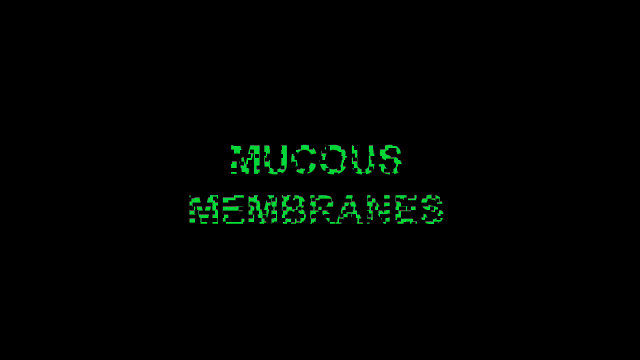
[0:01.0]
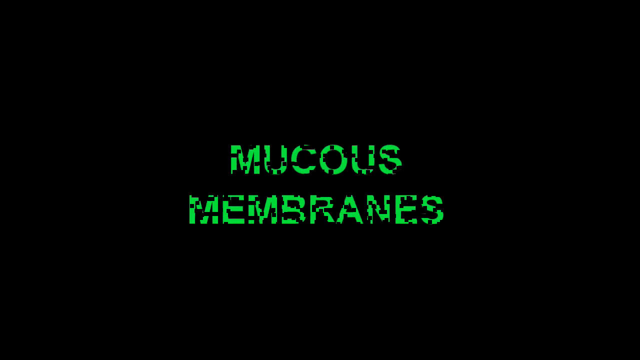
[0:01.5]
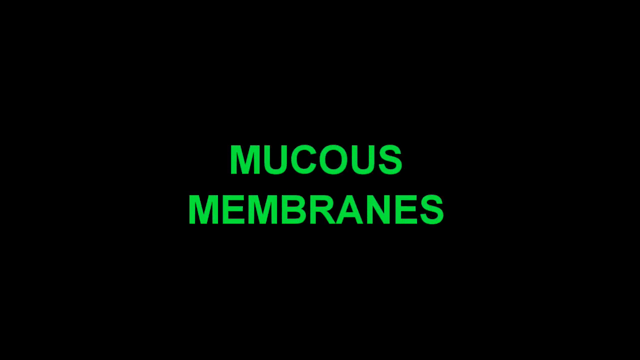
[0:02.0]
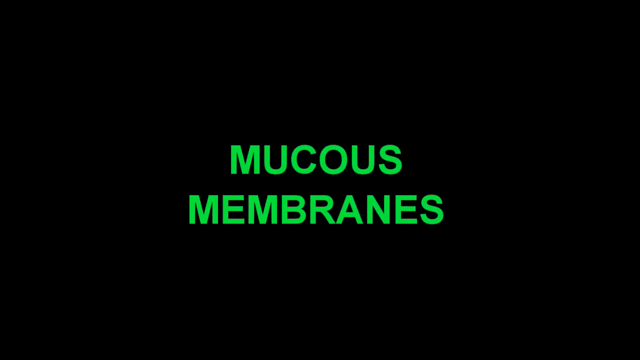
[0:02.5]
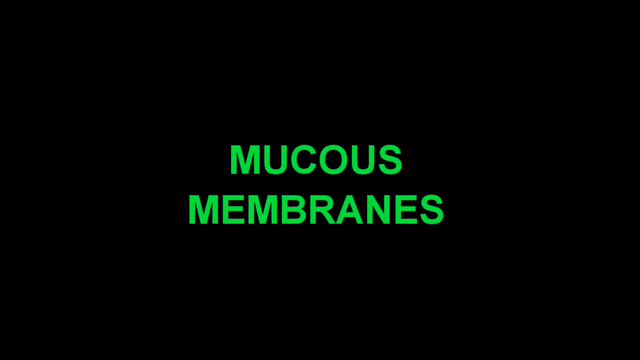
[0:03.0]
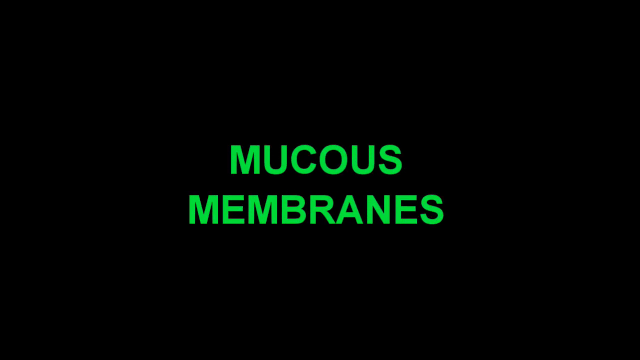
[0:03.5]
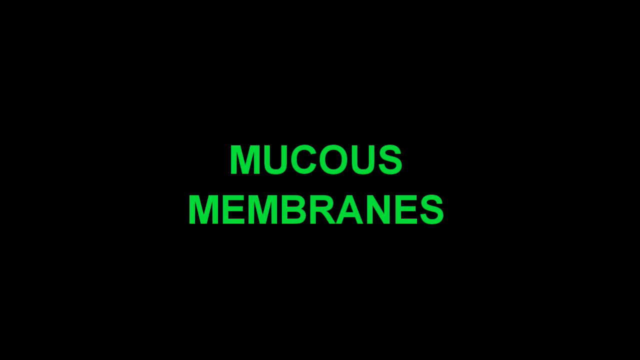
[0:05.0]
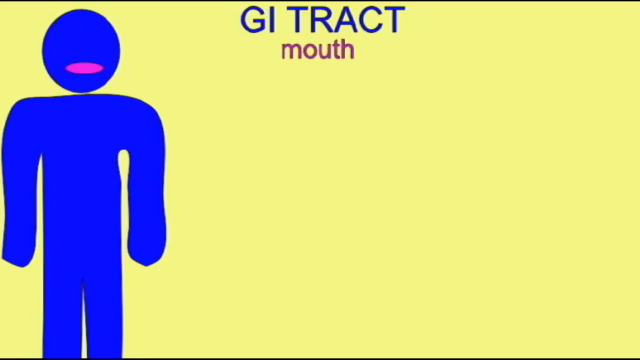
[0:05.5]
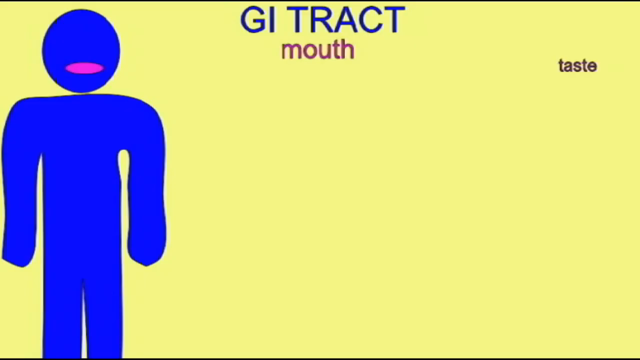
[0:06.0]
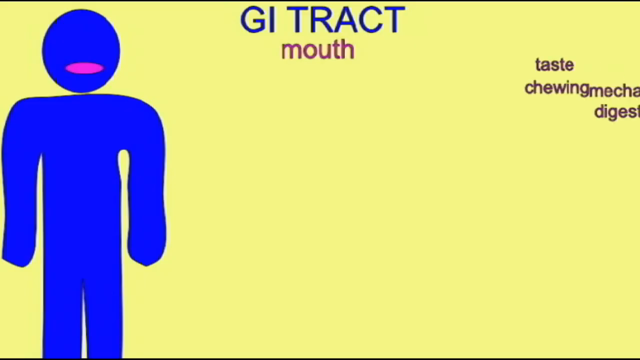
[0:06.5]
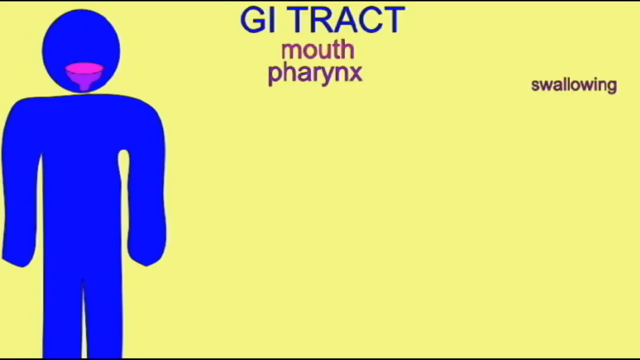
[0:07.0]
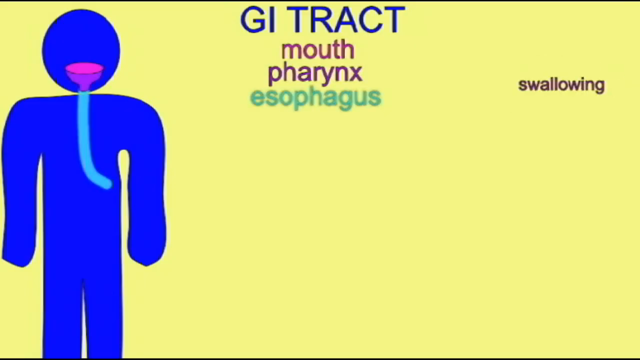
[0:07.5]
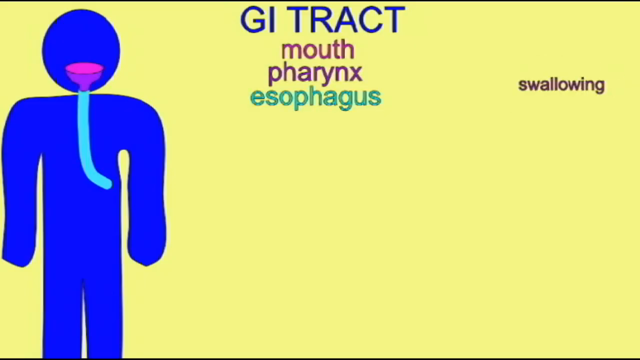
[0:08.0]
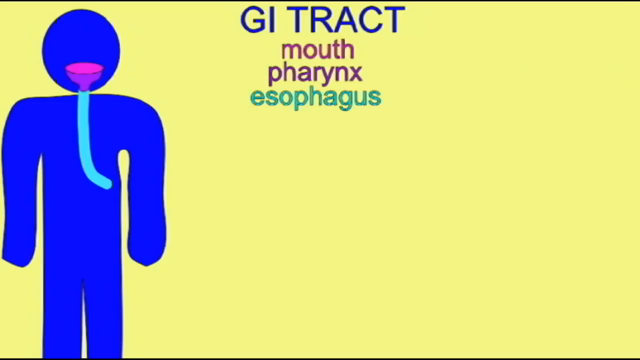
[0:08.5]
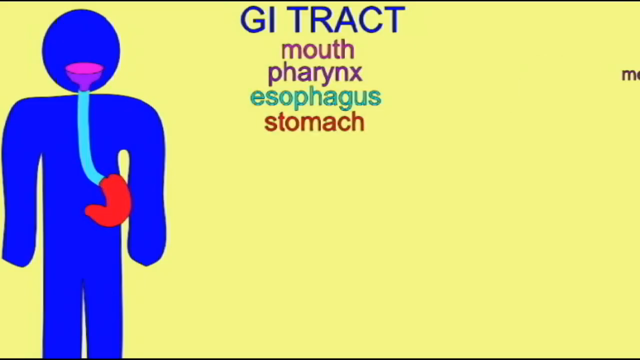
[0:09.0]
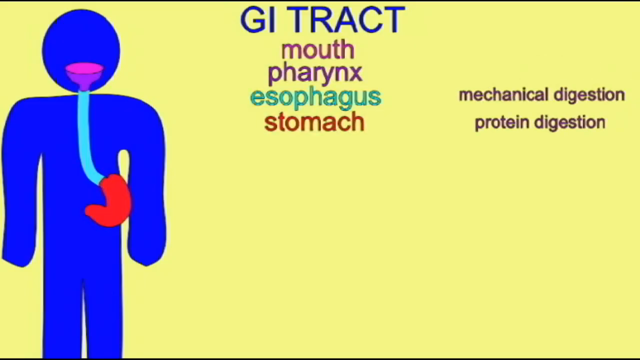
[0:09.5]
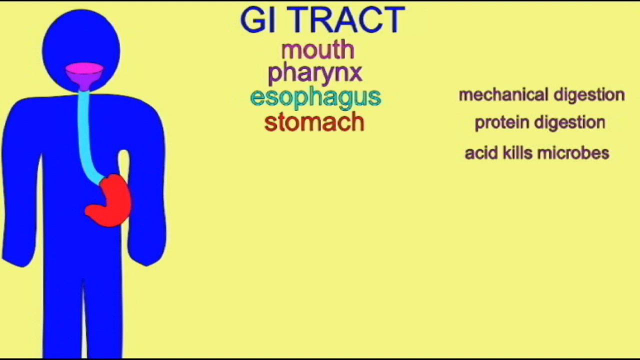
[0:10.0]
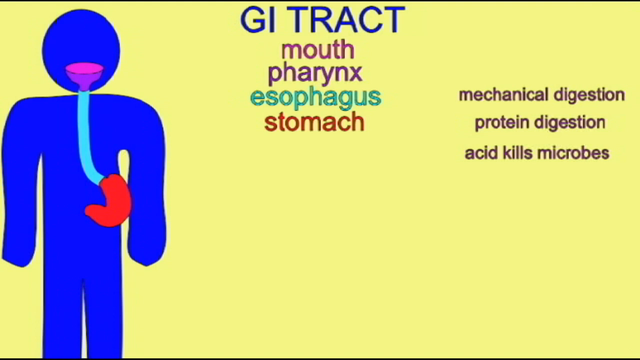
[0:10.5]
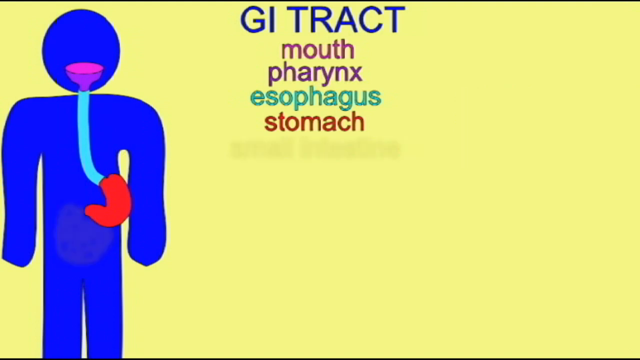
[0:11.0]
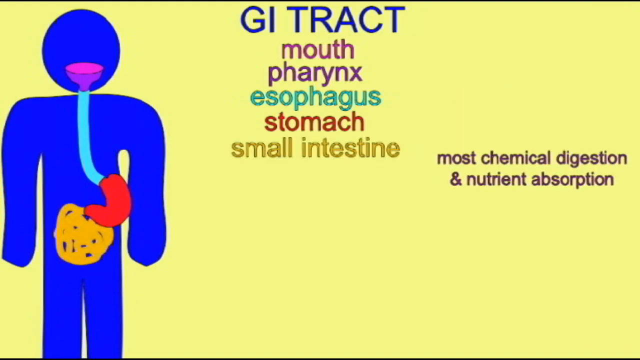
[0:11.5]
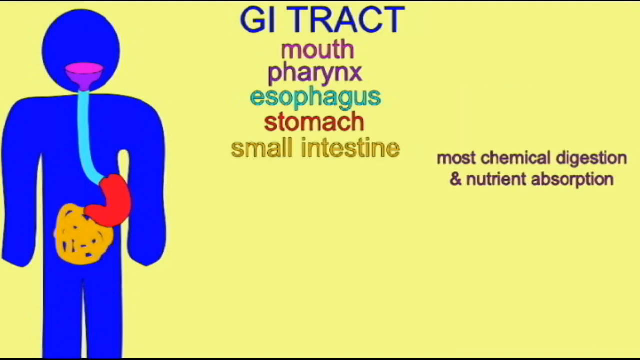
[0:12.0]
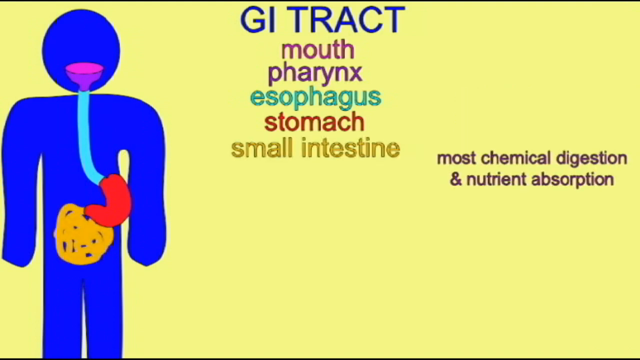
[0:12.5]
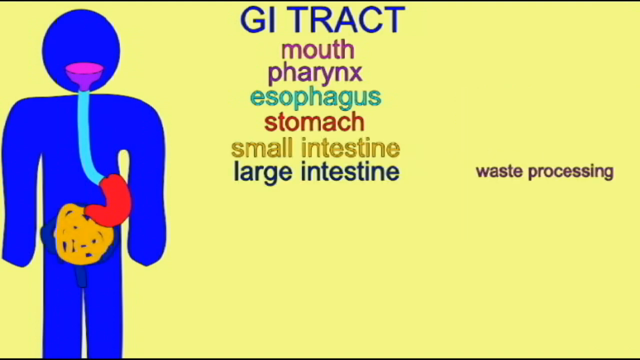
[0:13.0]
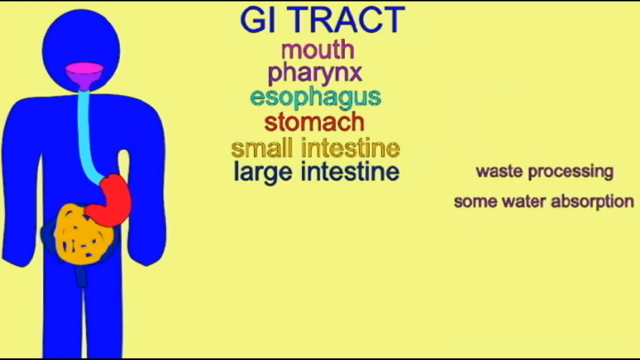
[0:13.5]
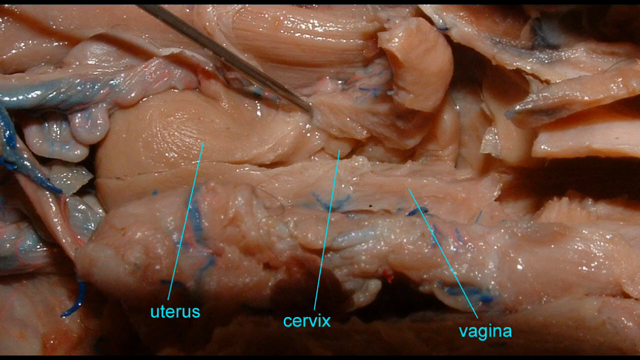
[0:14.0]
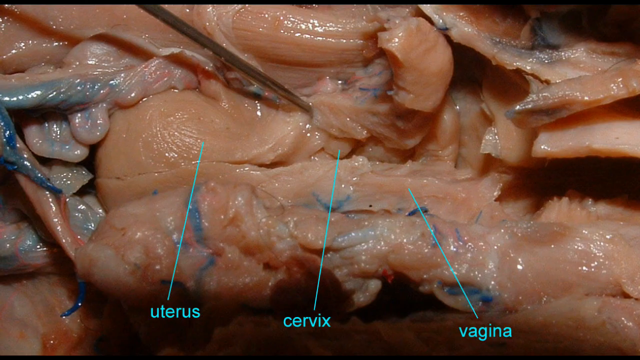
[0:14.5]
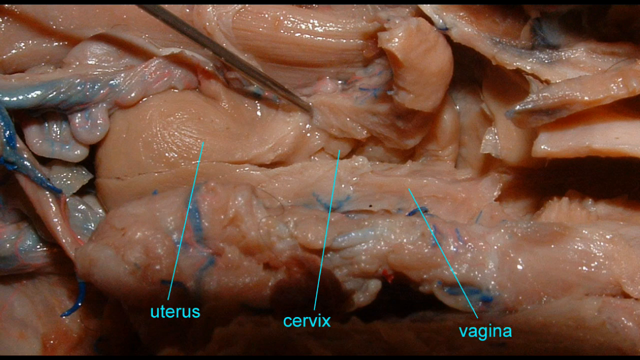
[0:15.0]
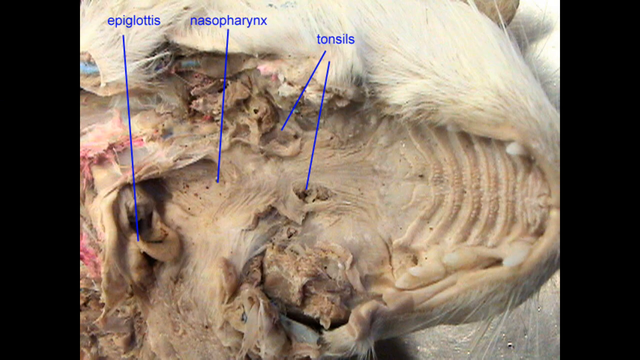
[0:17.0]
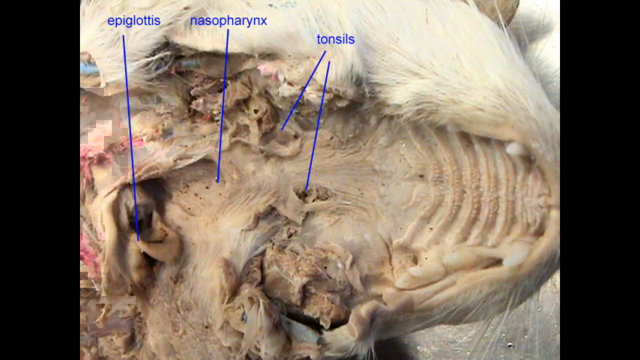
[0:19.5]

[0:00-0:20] The video opens on a computer image with a black background and green font, with text that reads "mucous membranes". It stays there for a while, then the screen changes to a blue stickman-looking figure on the left side against a plain yellow background. At the top of the screen it says "GI tract" and "mouth". The stickman has a small pink oval around the area representing his mouth, on the top circle where his face is. A series of words then begins to appear: underneath "GI tract" are "mouth", "pharynx" and "esophagus", and on the right it says "swallowing". Under "esophagus" the word "stomach" appears, and on the right side it says "mechanical digestion, protein digestion, acid kills microbes". As the text appears on the right side, the corresponding body parts appear on the stick figure. Under "stomach", "small intestine" appears, and a small intestine appears in the stick figure image; on the right it says "most chemical digestion and nutrient absorption". Next comes an image of what looks like intestines, apparently actual organic intestine, with a small metal probe pushing on part of it. At the bottom it says "uterus" and "cervix", showing the different parts of this organ. Then a different body part is shown, apparently some kind of animal with its mouth open, with blue lines connecting to words including "epiglottis", "nasopharynx" and "tonsils". The image then changes to another organic material that looks like more intestines.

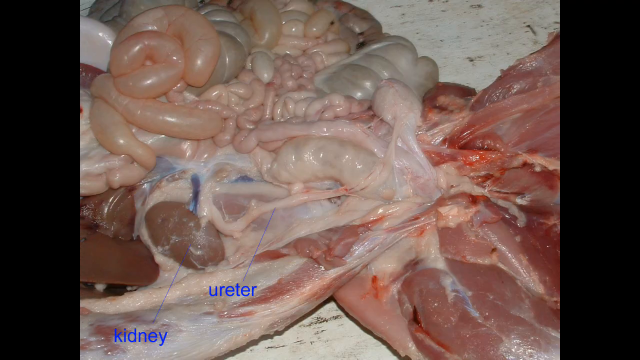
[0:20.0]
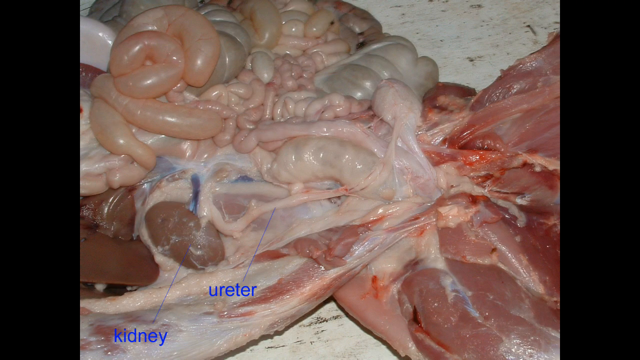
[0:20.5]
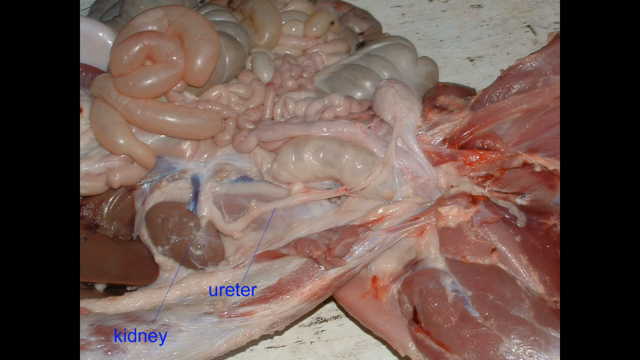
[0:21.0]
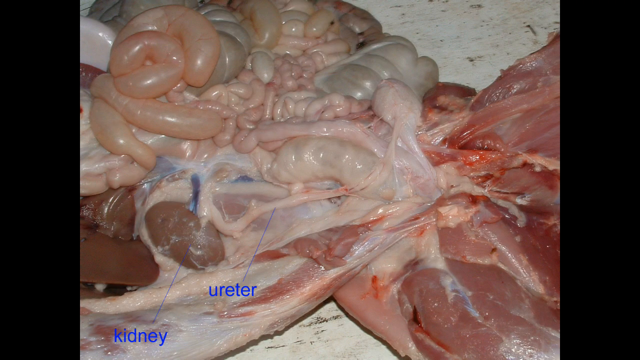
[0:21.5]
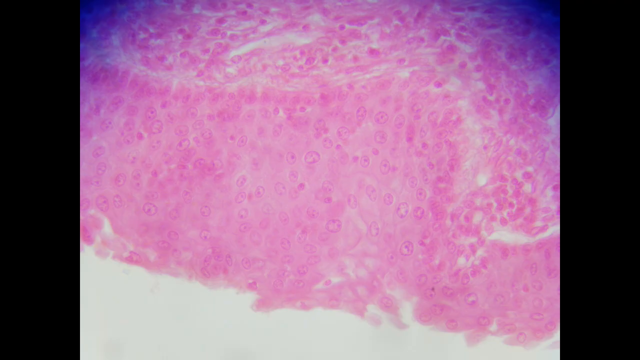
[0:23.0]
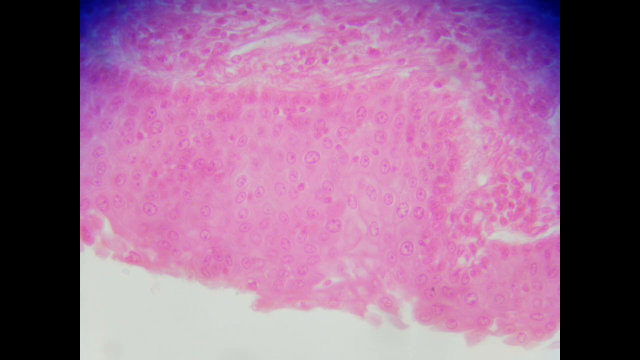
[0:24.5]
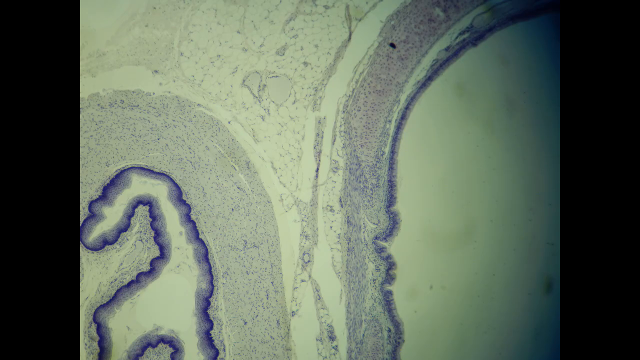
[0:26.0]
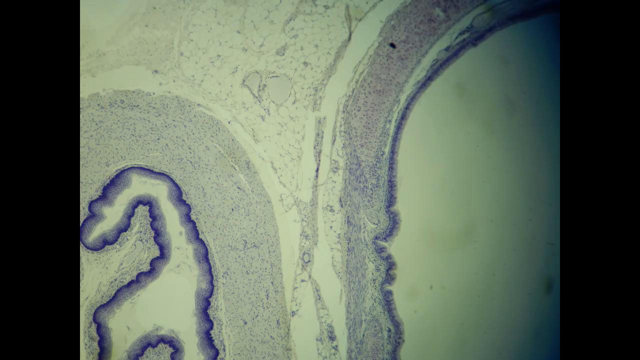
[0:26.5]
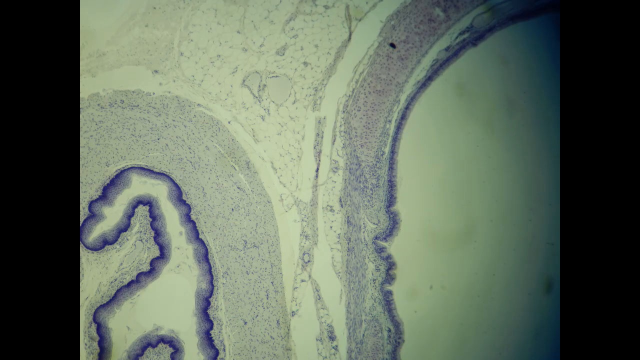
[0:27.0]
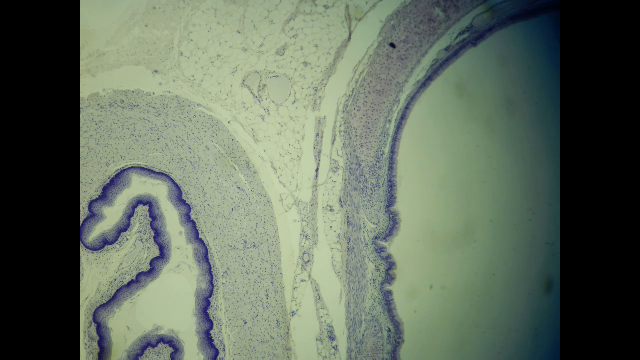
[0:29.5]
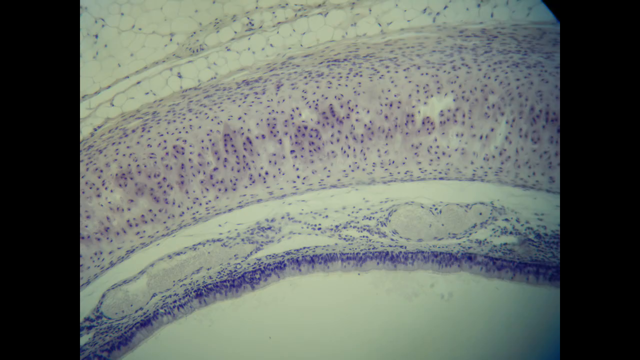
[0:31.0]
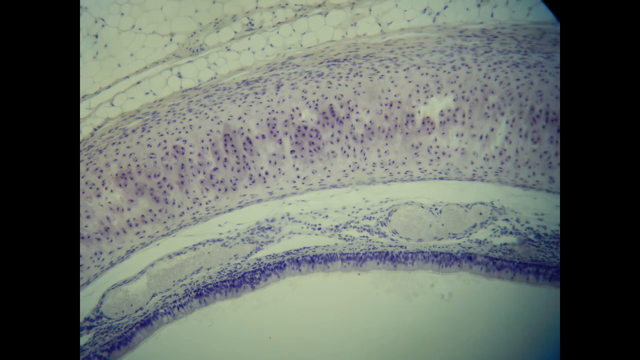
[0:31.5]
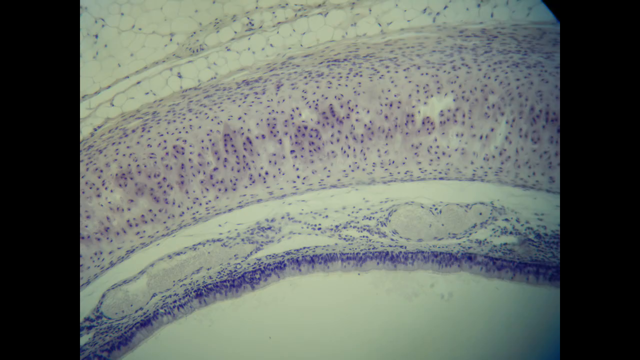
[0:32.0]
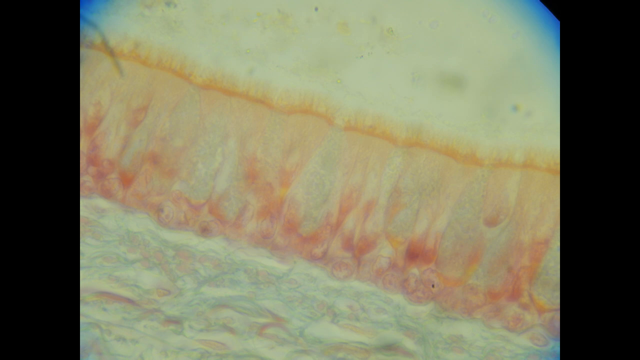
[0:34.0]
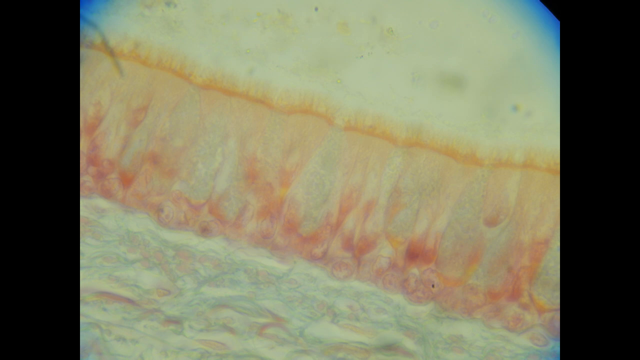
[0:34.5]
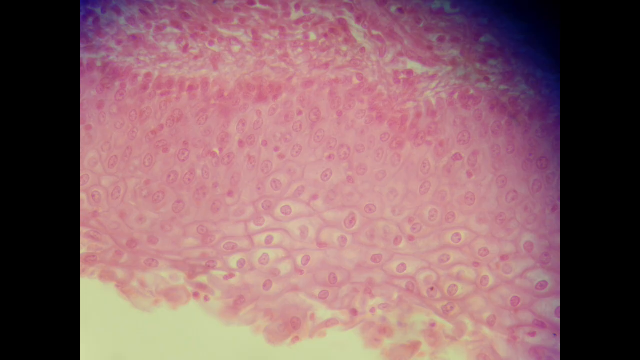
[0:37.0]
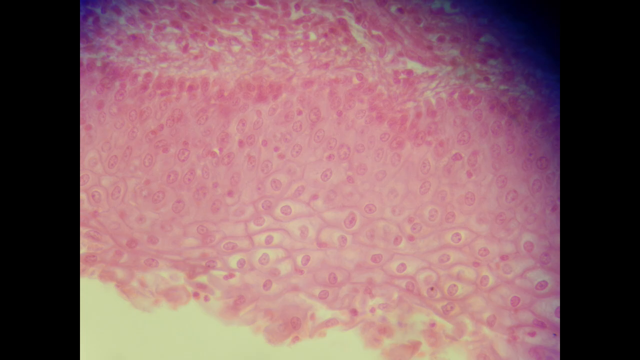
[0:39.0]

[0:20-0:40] The shot shows what appears to be organic material from inside a stomach, looking like intestines and a number of different organs on some sort of table. It stays there for a while. Lines attach to different points of the image, with blue text at the bottom; one line points to a "ureter" and another to a "kidney". The image then changes to what looks like an x-ray of some kind of organic substance inside the body, with many circles and a lot of pink. It changes to a different image that looks like a close-up of possibly some kind of cell or mitochondrial wall, and stays there for a while; the left side almost looks like a map but is organic material found inside the body. Another image follows showing many dots and lines and cell-looking objects. All of these appear to be shown through either an x-ray or a microscope. The image changes twice more, to a group of pink-looking cells, and then to a group of green-looking cells.